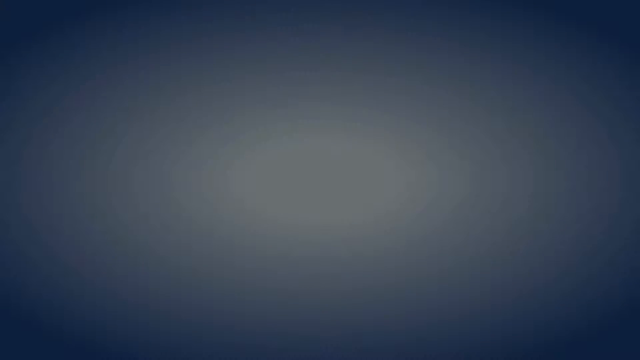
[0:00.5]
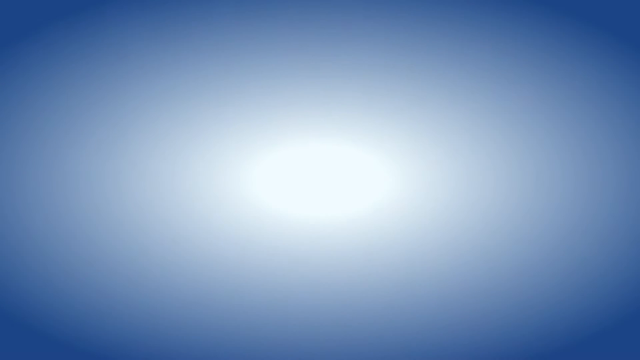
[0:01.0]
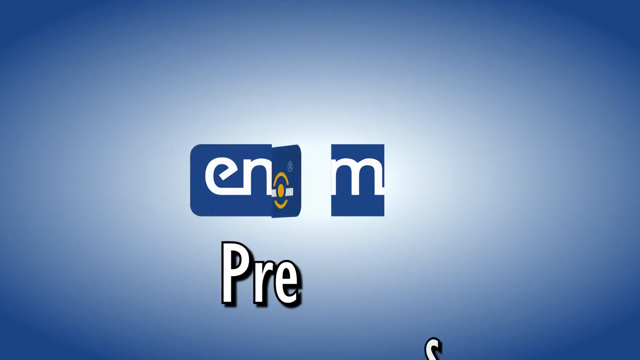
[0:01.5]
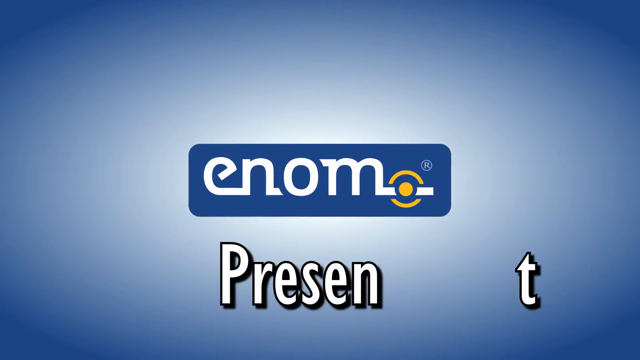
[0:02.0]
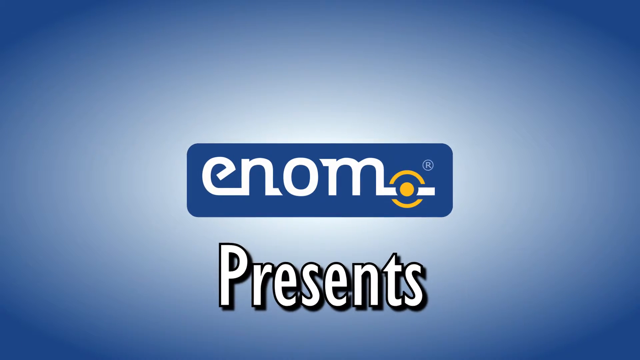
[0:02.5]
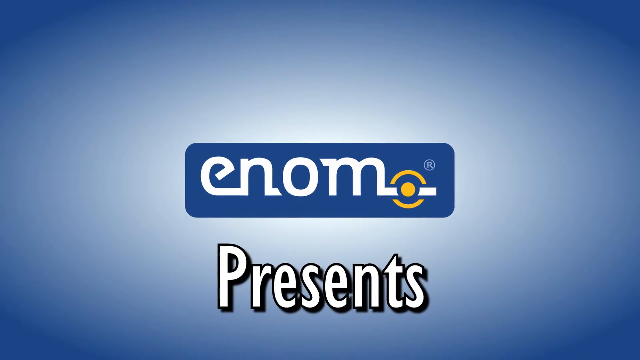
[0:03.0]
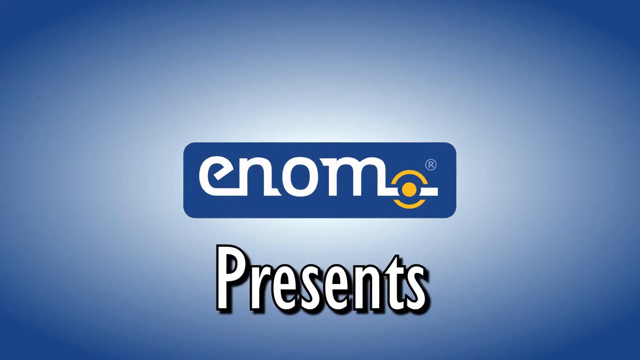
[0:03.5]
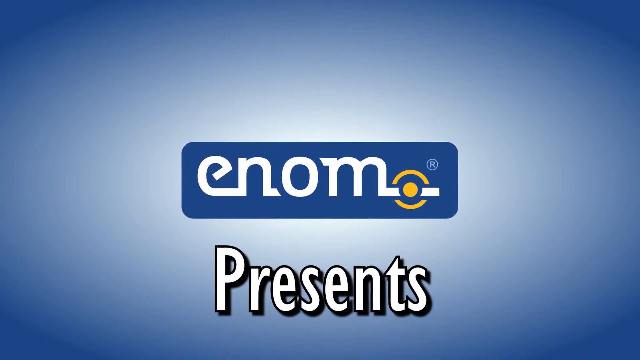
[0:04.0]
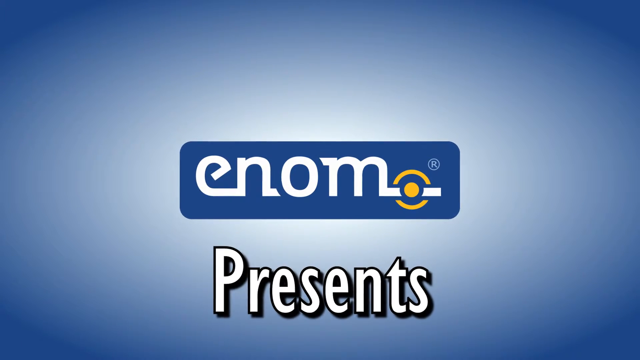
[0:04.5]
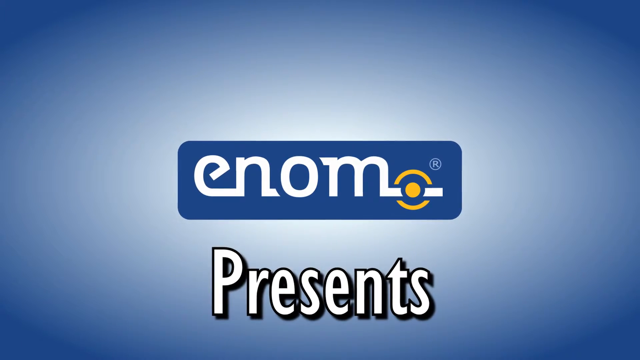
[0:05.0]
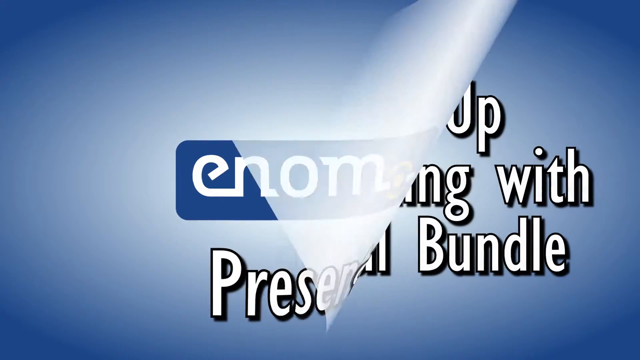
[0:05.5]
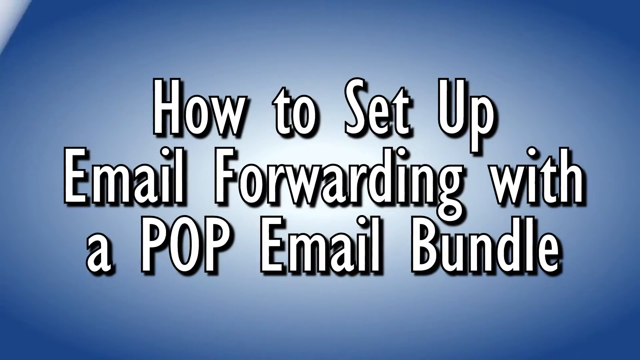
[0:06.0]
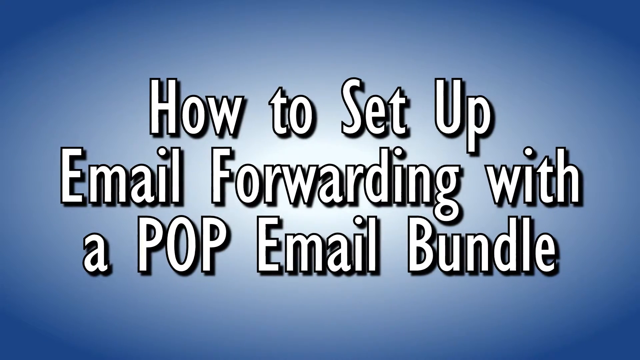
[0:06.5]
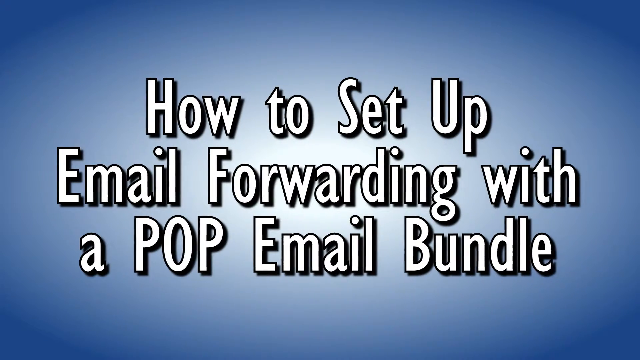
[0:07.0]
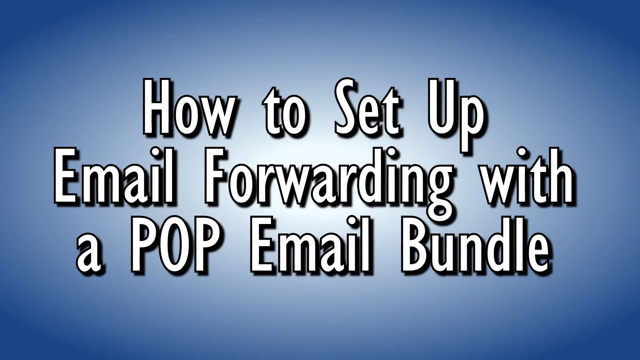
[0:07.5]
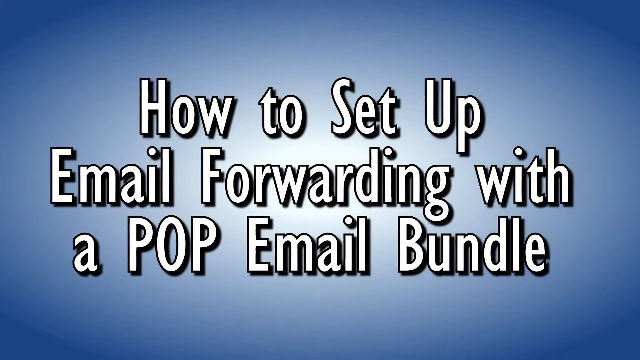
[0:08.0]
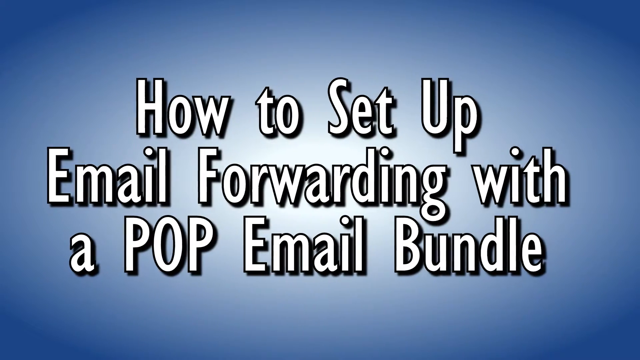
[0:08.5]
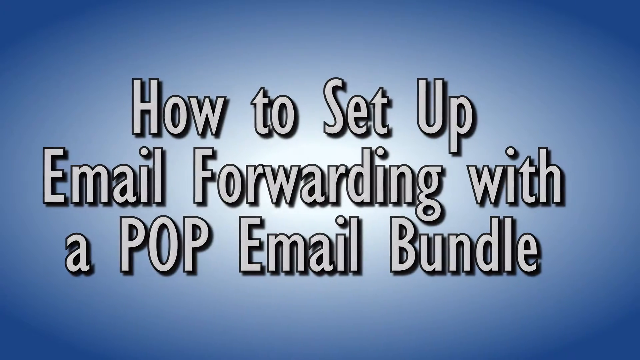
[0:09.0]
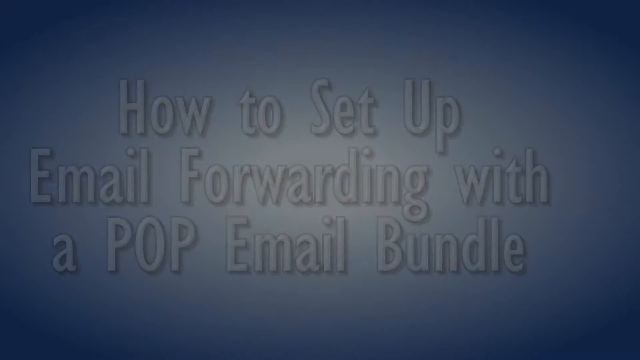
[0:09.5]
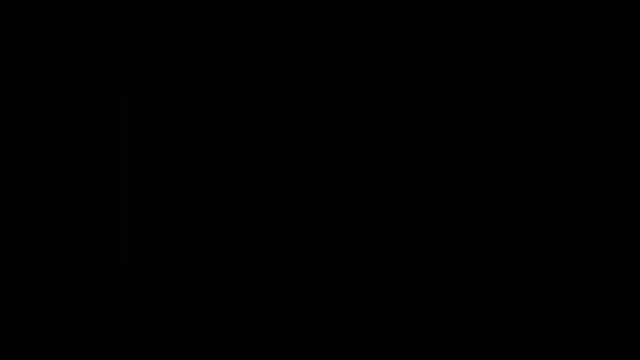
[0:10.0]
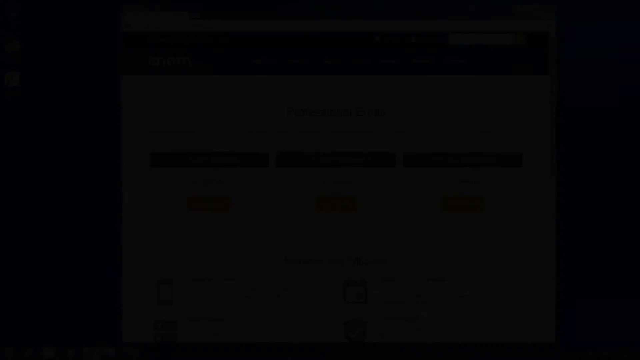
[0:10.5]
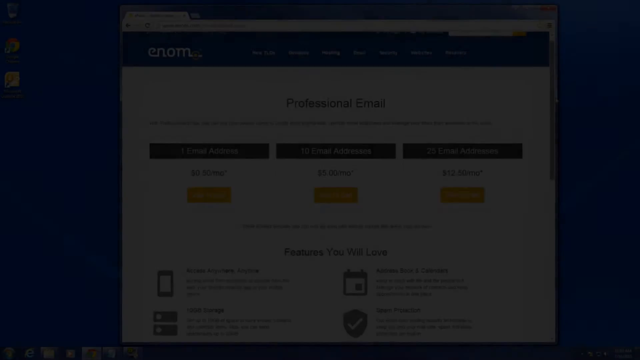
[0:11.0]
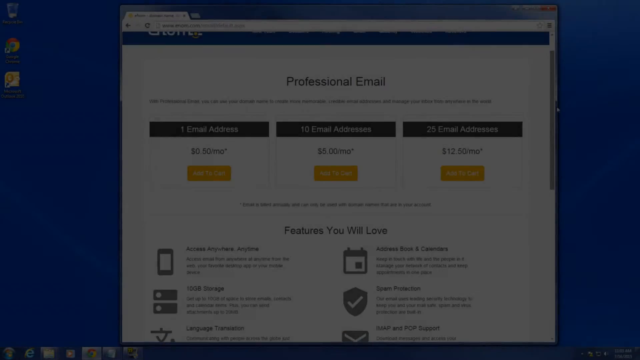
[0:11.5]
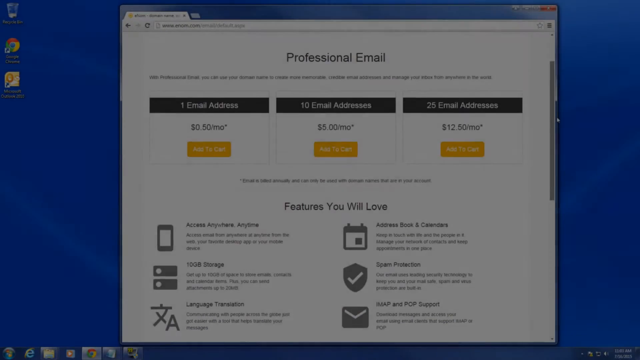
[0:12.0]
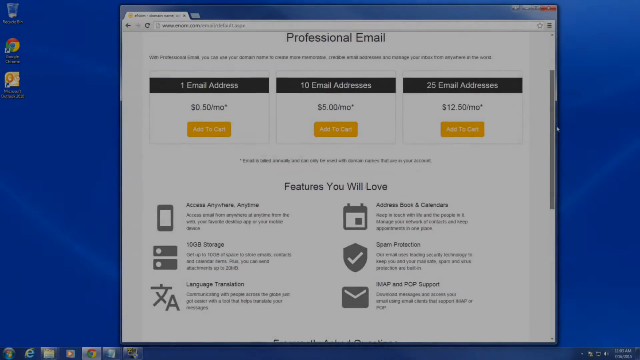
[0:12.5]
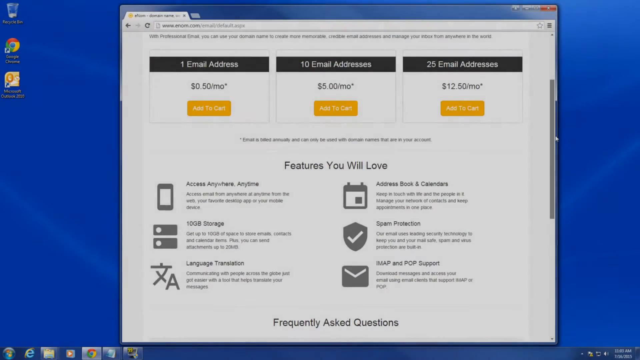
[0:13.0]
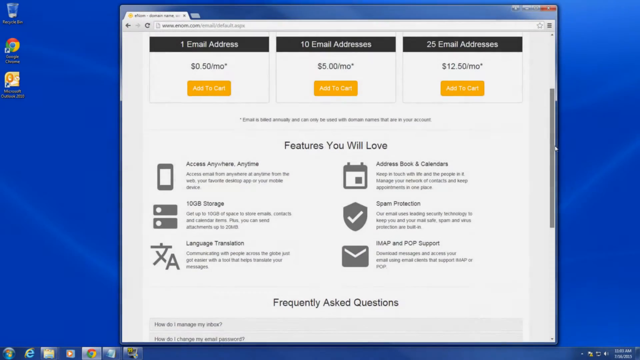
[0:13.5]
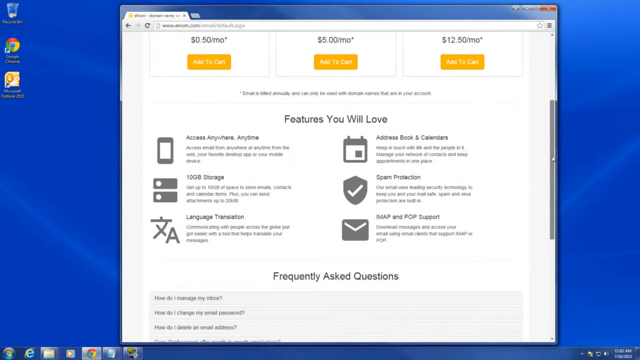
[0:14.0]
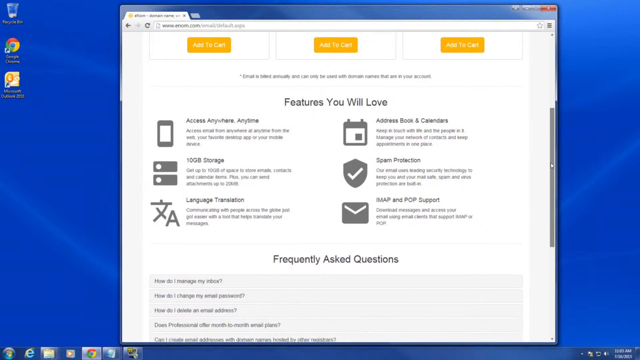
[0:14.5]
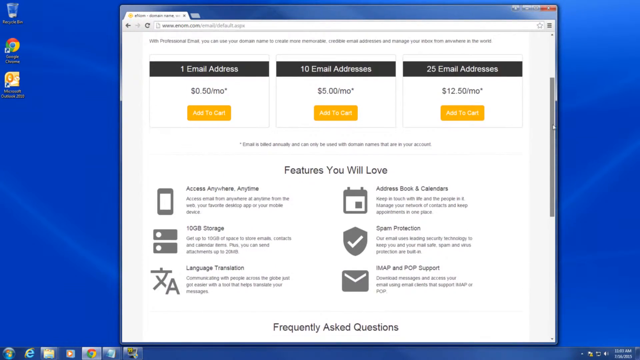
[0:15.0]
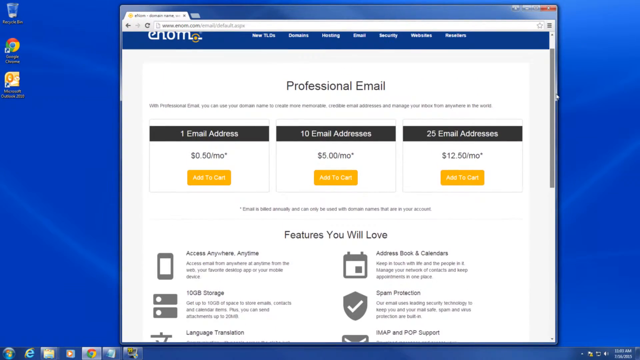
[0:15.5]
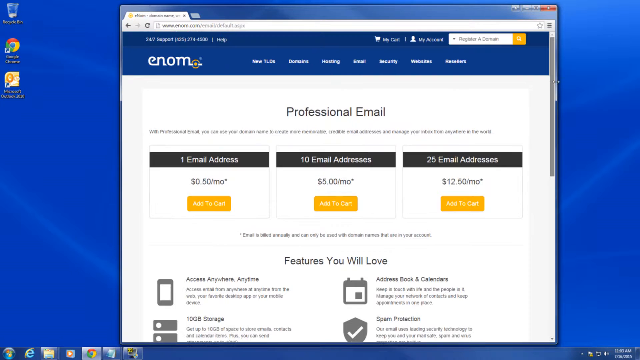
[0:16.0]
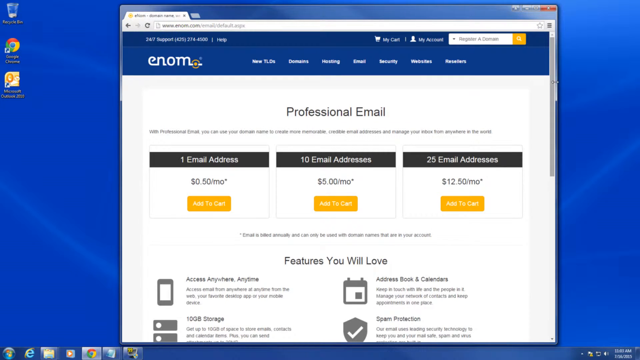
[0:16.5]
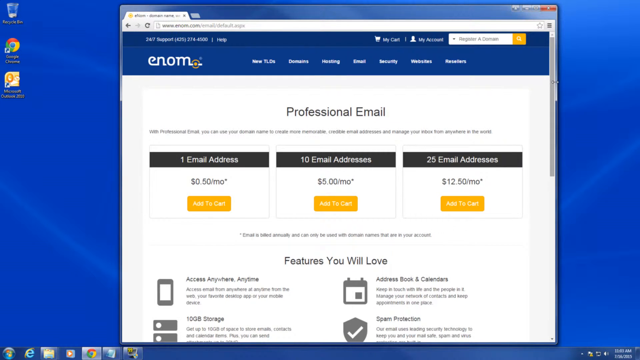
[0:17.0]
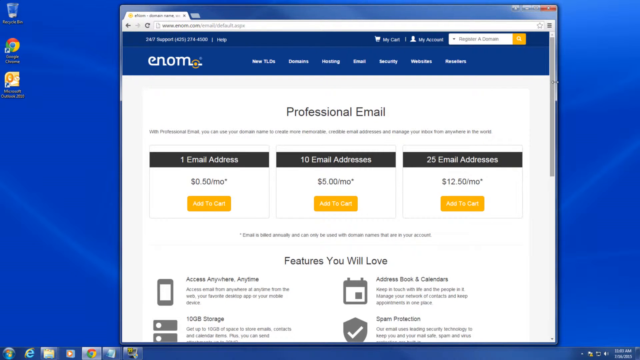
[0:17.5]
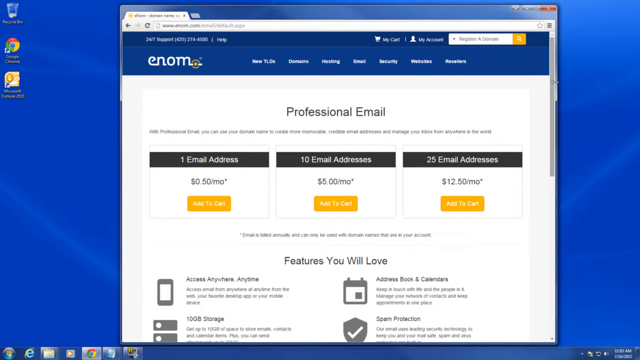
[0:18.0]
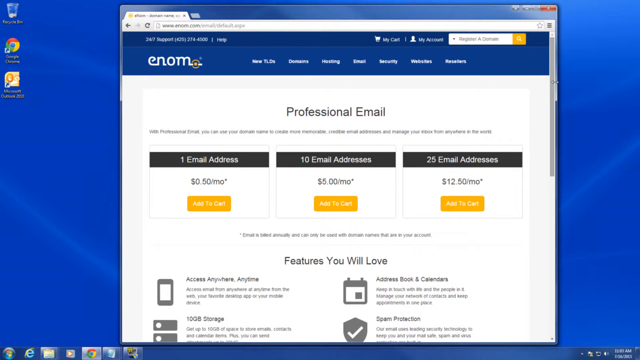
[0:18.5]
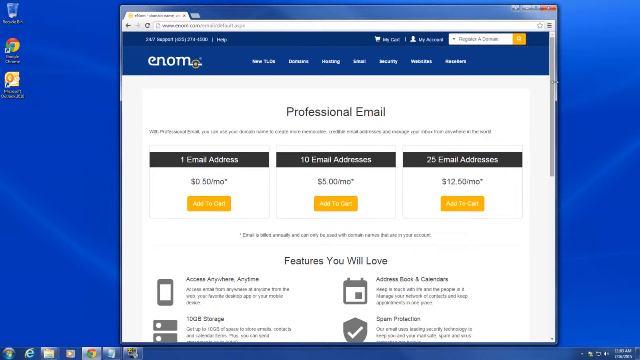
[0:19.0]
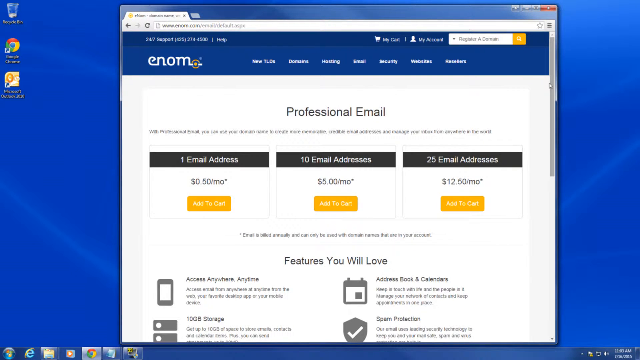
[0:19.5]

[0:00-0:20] A blue background with a light in the middle appears, and the text "Enom presents" pops up. On the same background, white letters with a black outline read "How to set up email forwarding with a pop email bundle." The video goes to a black screen, and the next screen looks like someone's computer screen with a page pulled up. The page goes through different options, and someone uses a white arrow pointer to pull down the scroll bar to see more of the options. At the top, "Enom" appears on a blue label, along with different options that can be clicked on the site. Below that, the main screen says "Professional email" and shows three different options with three different price ranges, each with "Add to cart" in little yellow boxes.